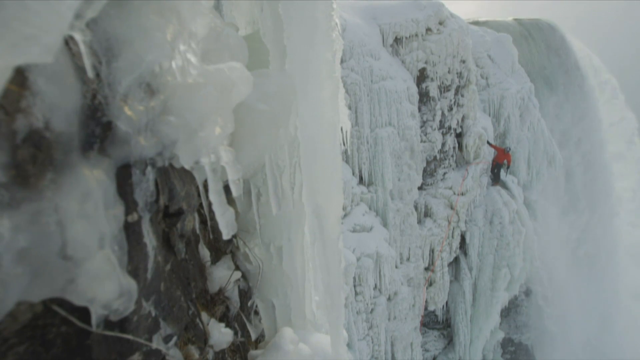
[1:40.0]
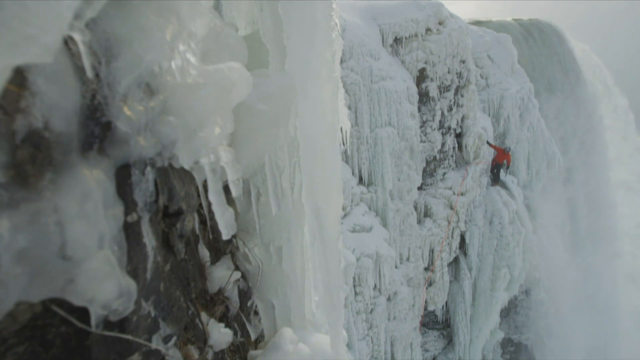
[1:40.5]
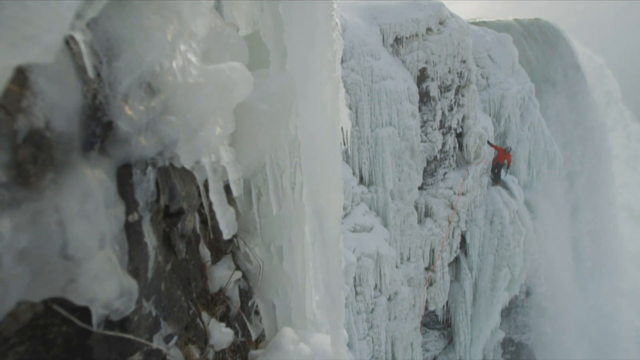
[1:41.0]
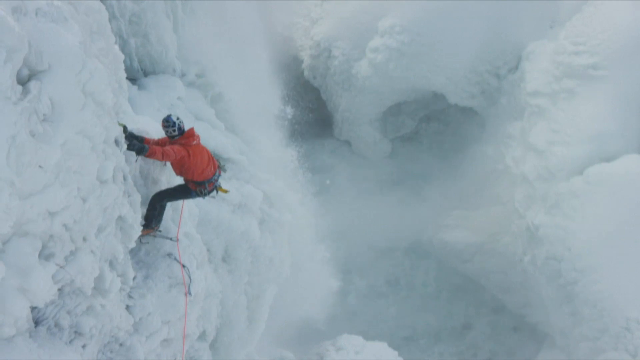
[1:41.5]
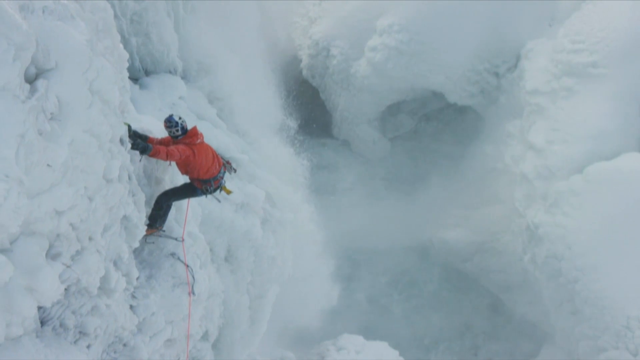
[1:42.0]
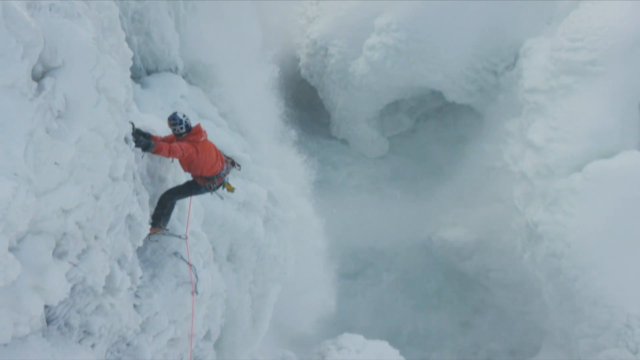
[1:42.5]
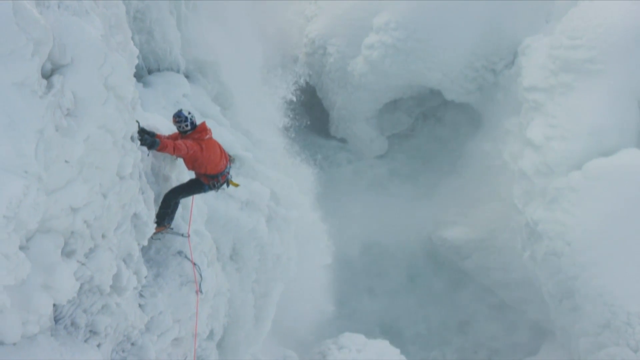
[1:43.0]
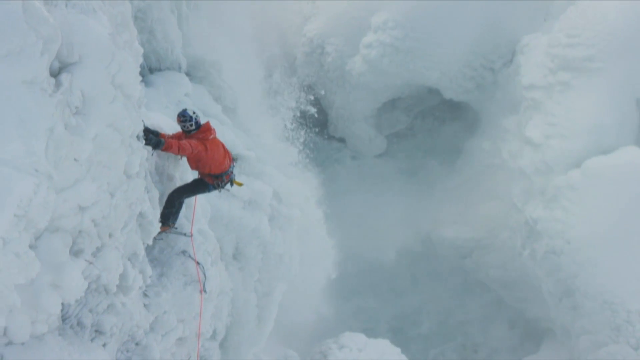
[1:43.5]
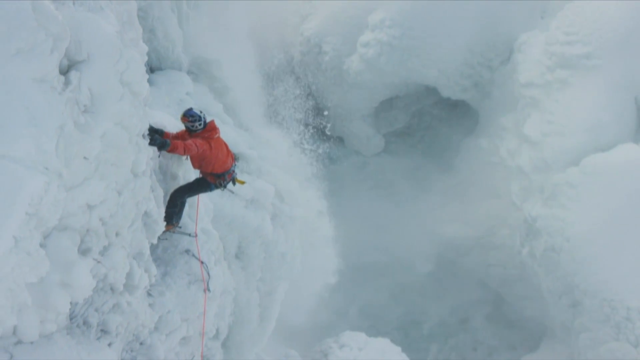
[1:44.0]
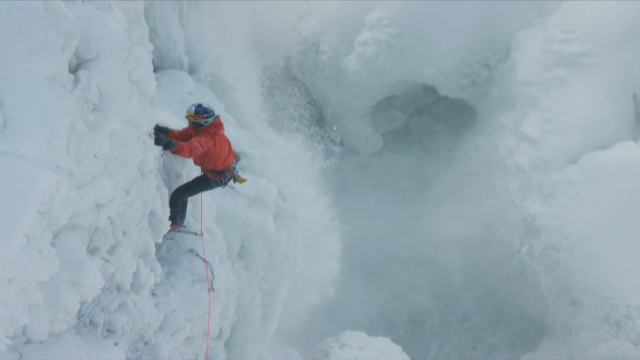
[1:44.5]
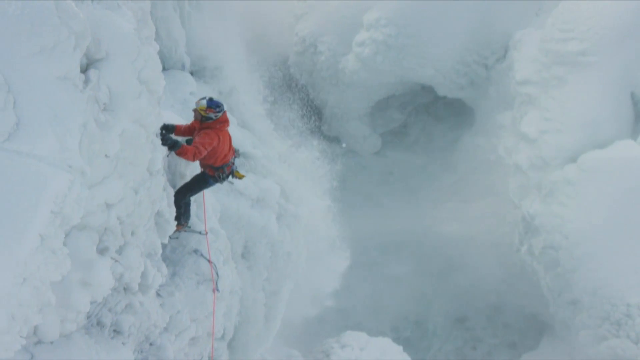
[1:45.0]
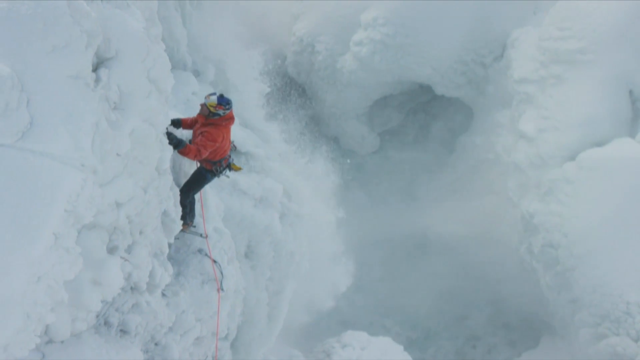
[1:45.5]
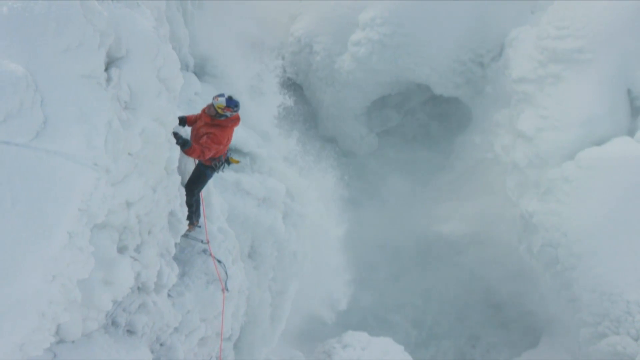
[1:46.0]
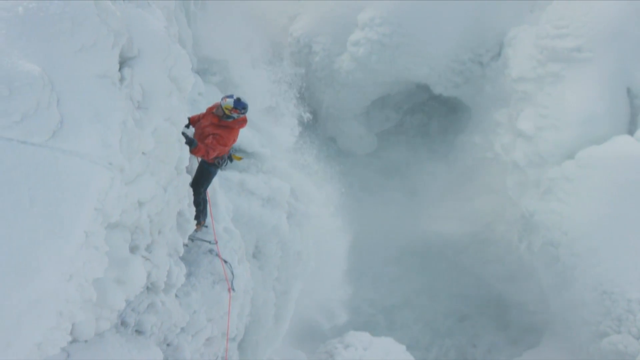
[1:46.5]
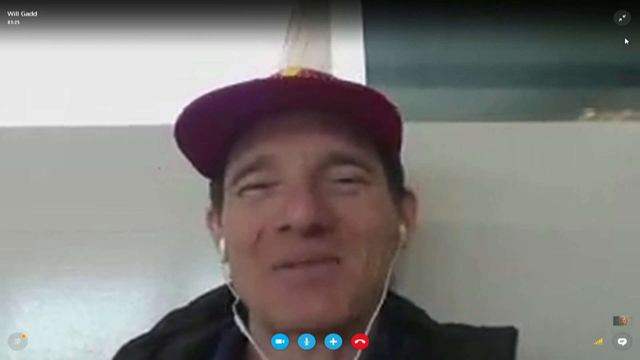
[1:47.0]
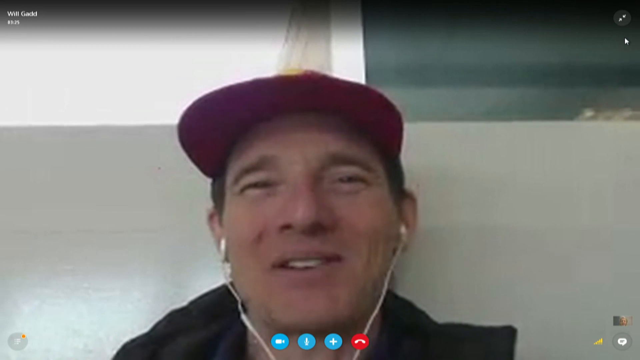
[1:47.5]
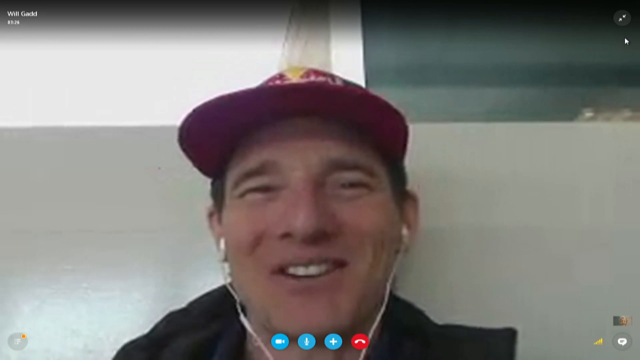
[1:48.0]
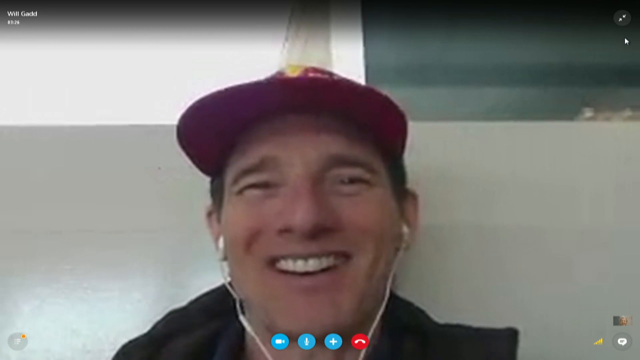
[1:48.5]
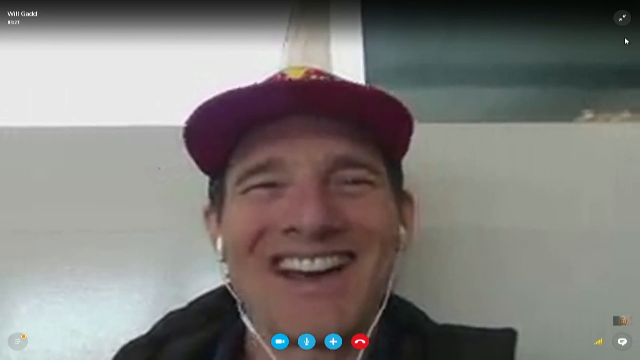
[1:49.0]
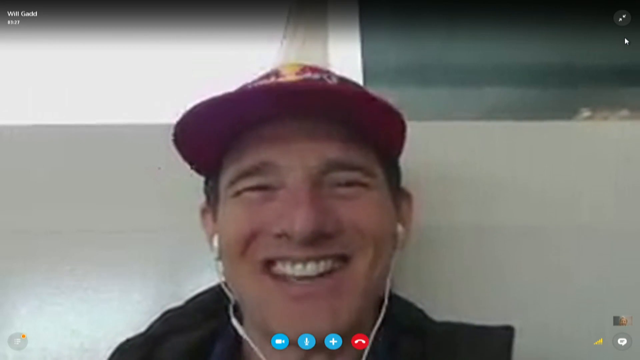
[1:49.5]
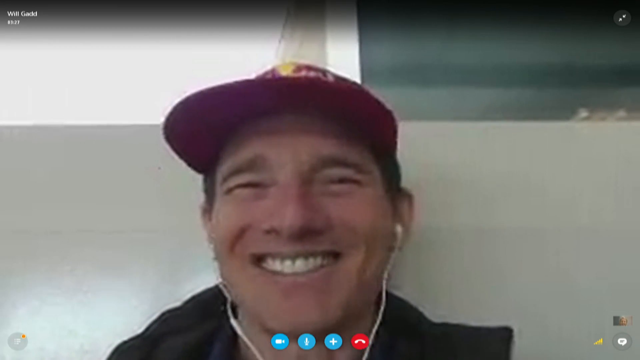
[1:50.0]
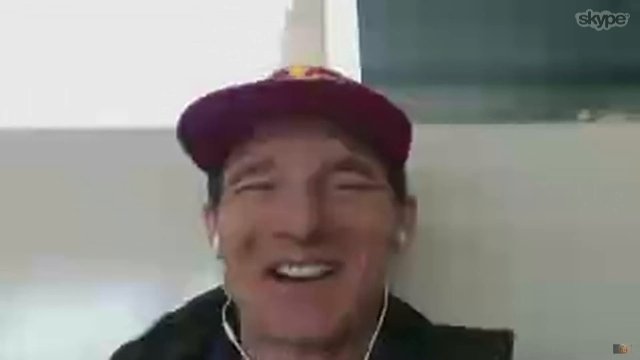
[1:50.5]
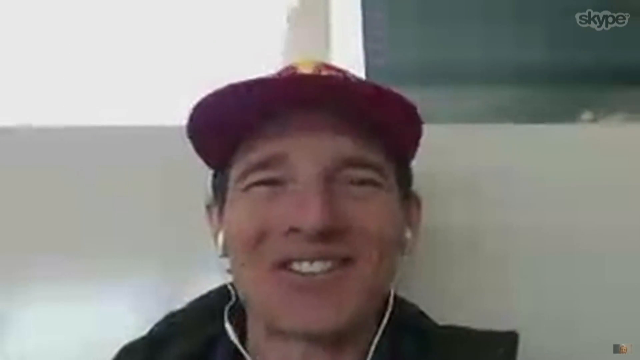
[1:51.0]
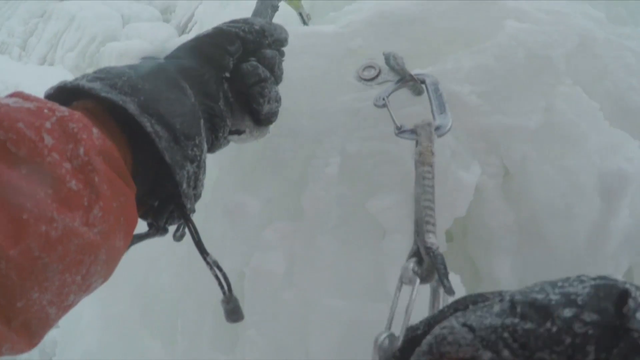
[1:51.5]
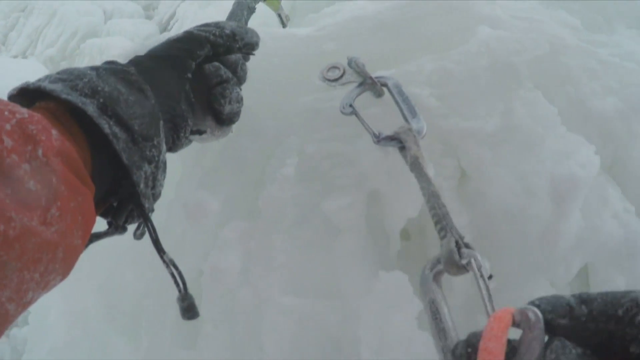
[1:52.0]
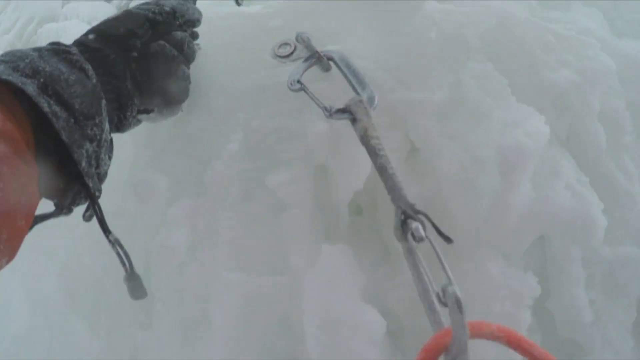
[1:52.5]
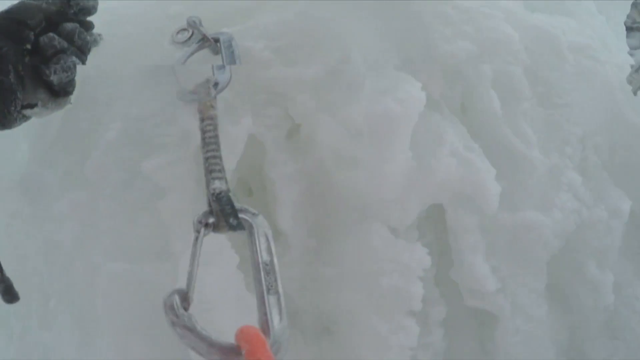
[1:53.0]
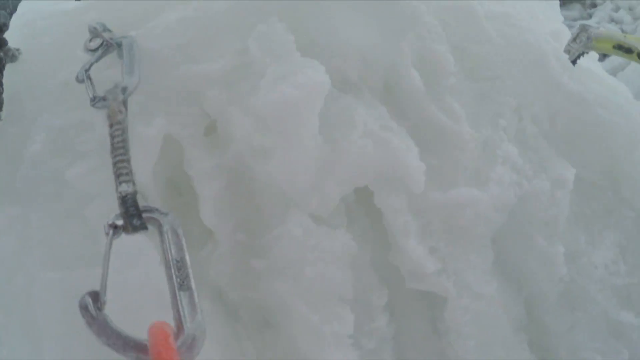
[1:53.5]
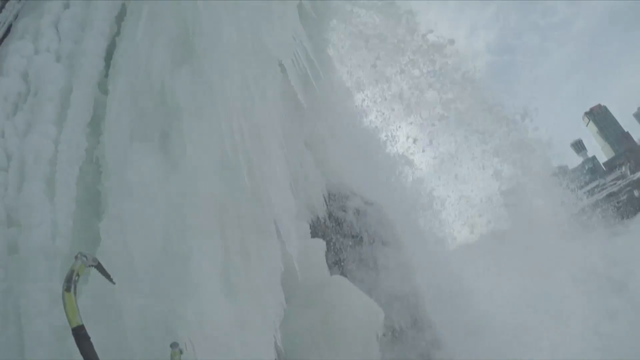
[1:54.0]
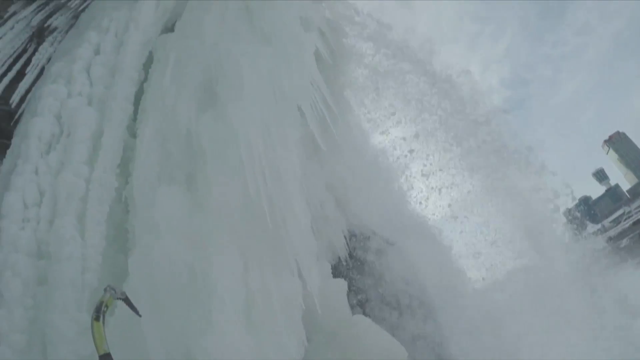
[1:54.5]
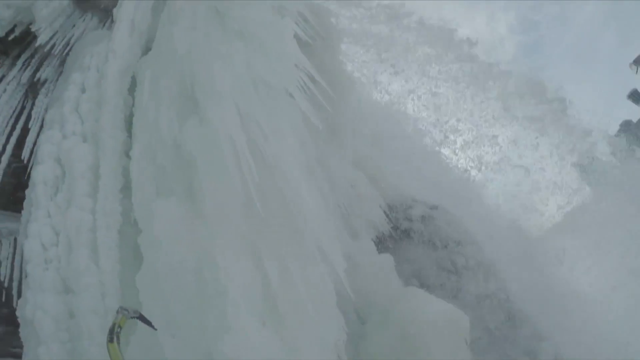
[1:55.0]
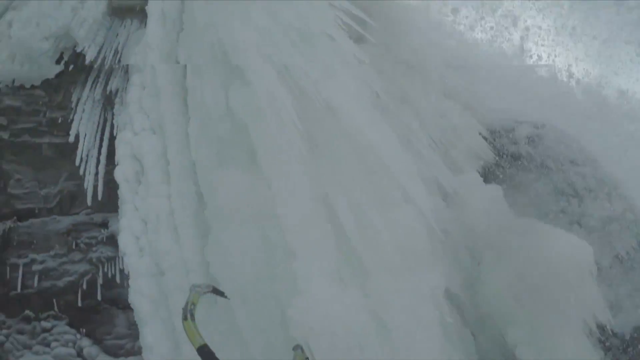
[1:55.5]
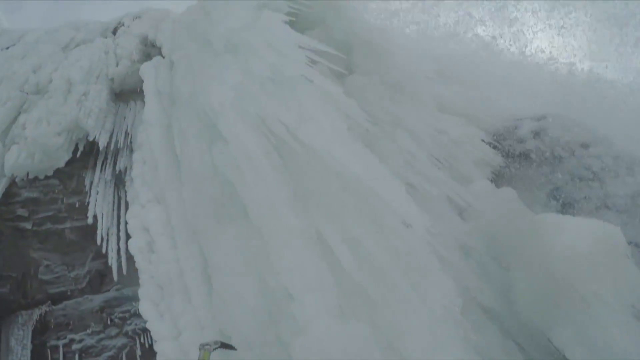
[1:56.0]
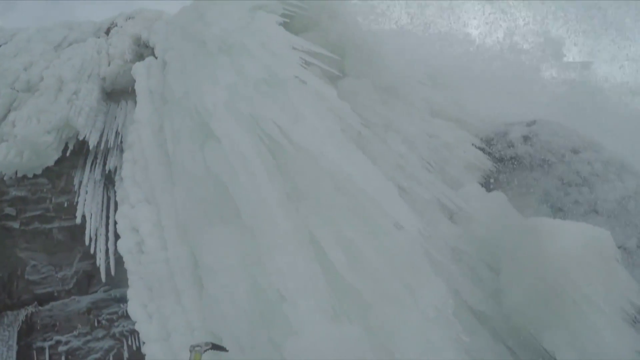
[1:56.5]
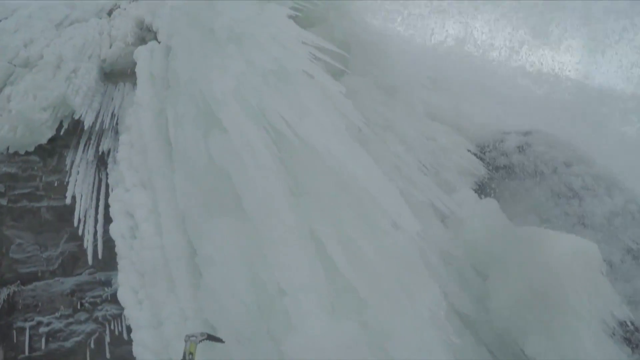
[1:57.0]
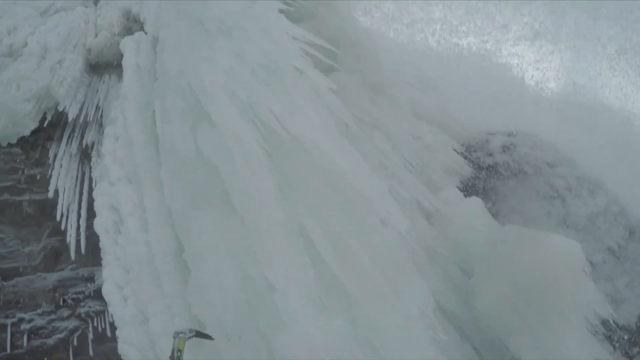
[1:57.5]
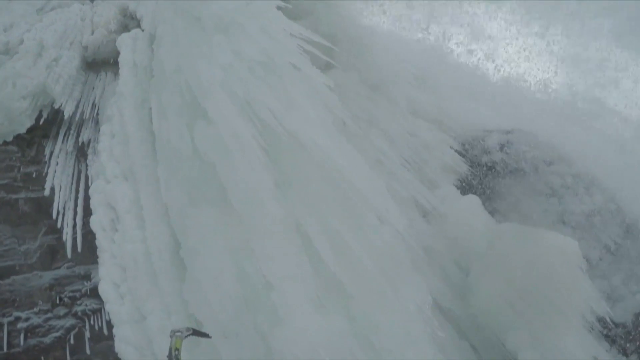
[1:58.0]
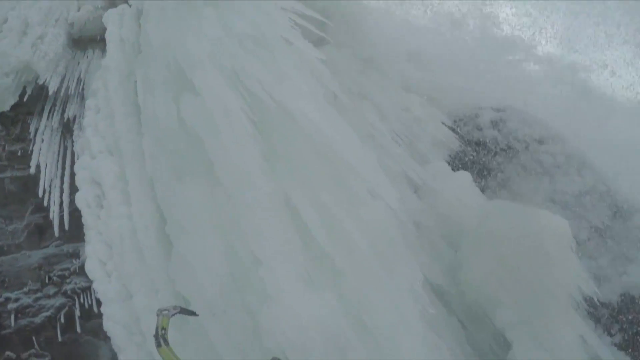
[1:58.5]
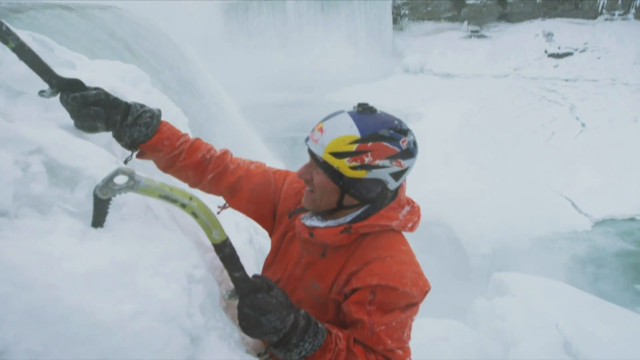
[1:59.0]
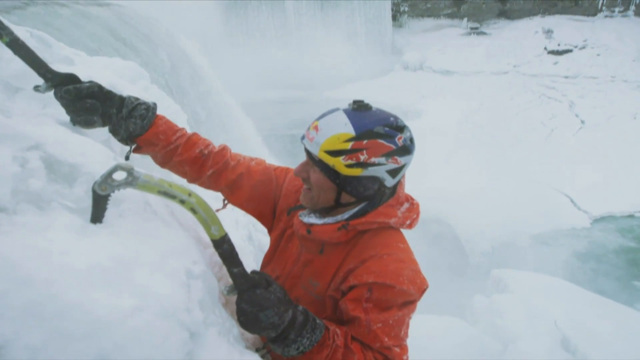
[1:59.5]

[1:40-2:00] A wider shot shows the man in the red jacket and black pants, seemingly the same climber, heading up to the left. Water seems to be falling toward the center and the right. Gadd is shown in the Skype call, with his name appearing at the top left; he smiles broadly, seems to be talking, nods his head and laughs. A man's left hand puts a pick up higher, and a sort of pinion or secure clip holding a rope is shown to the right. A wider shot shows water coming down at the top right. Then the man's face is shown, and it appears to match Will's face from the Skype call. Details on his purple and white helmet are visible, along with the red jacket, as he uses pick-like hooks to climb the ice.